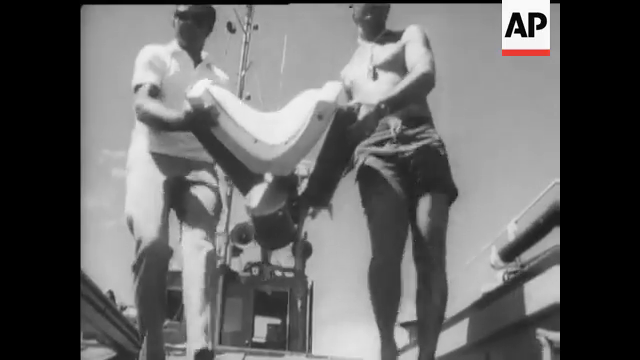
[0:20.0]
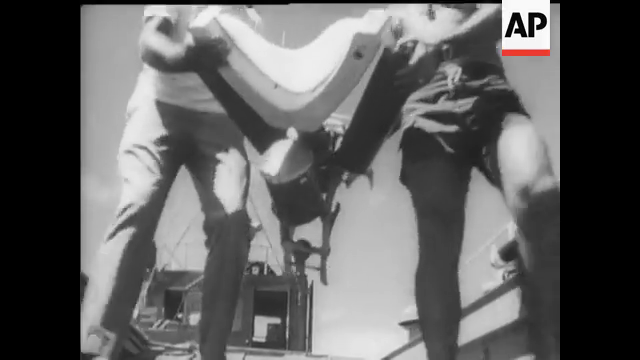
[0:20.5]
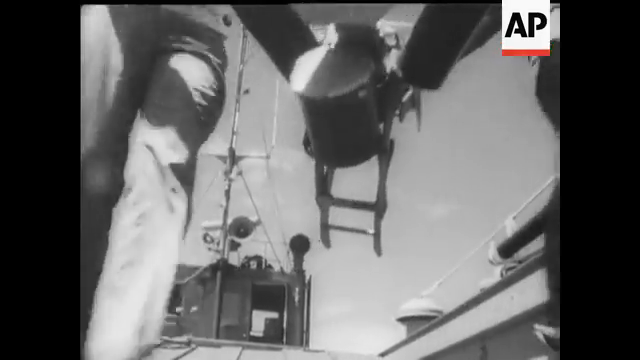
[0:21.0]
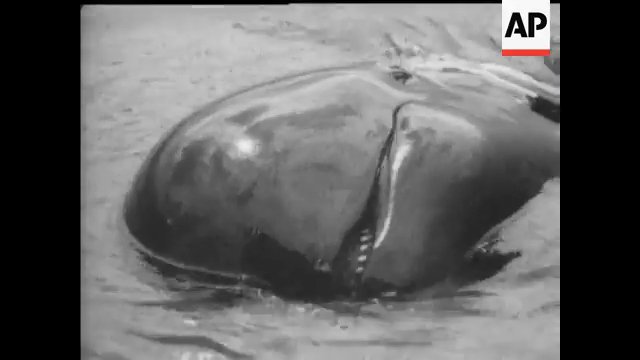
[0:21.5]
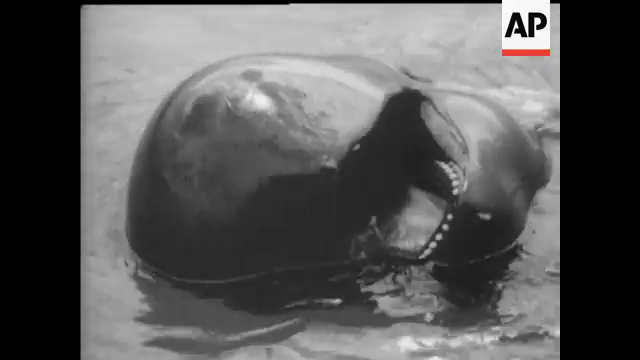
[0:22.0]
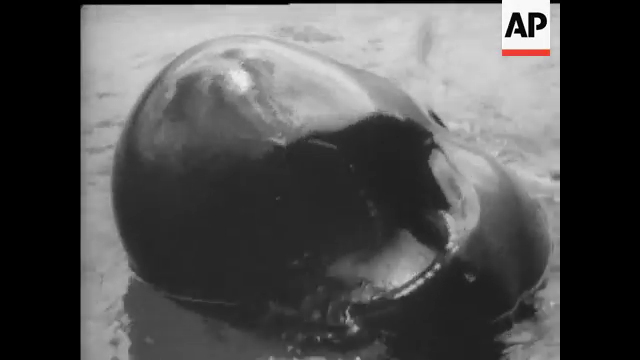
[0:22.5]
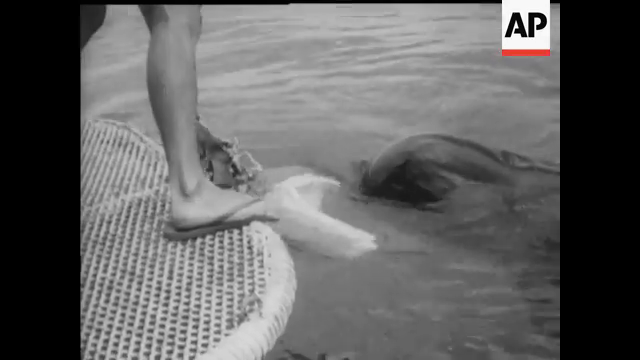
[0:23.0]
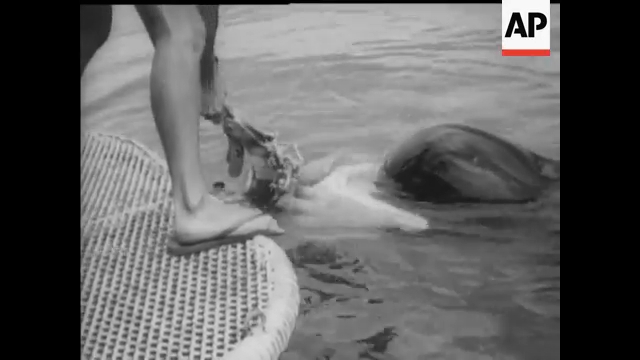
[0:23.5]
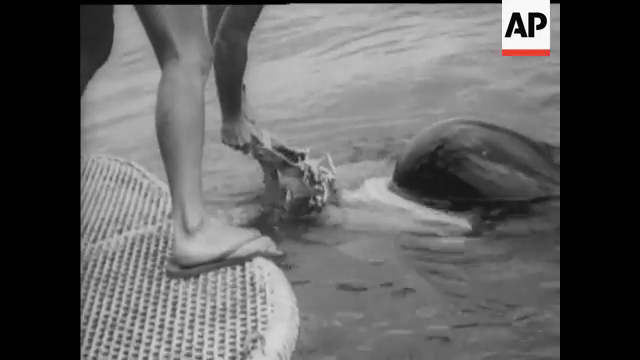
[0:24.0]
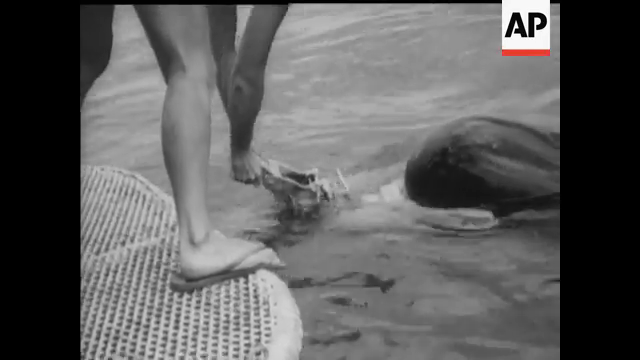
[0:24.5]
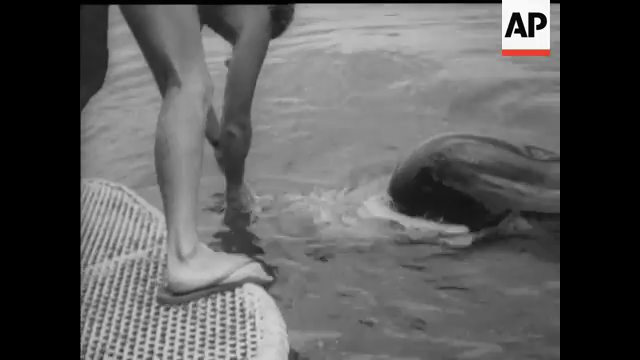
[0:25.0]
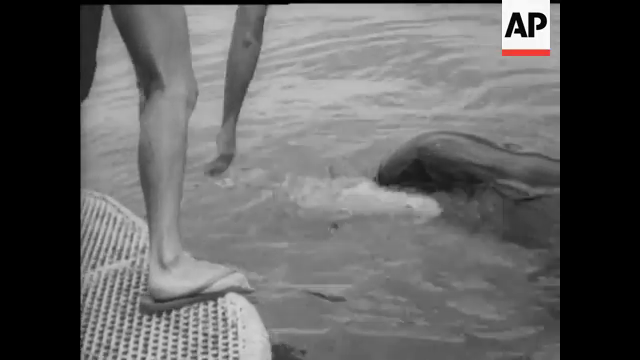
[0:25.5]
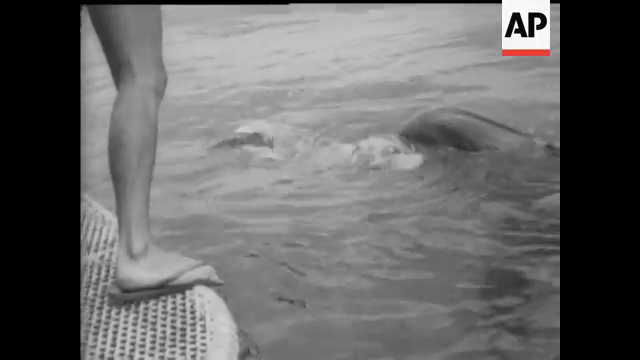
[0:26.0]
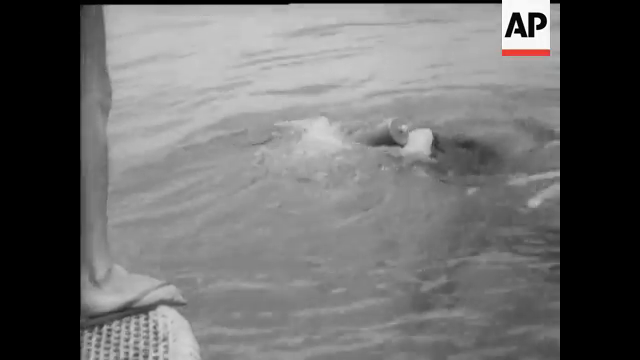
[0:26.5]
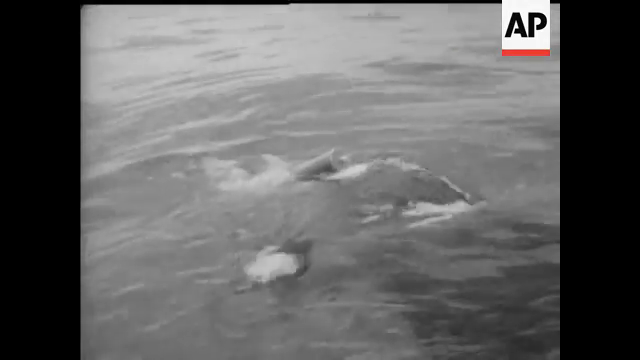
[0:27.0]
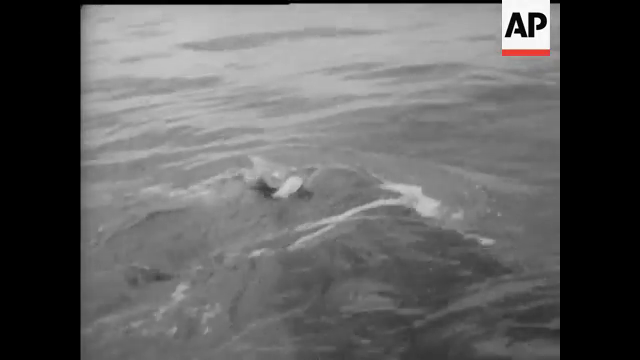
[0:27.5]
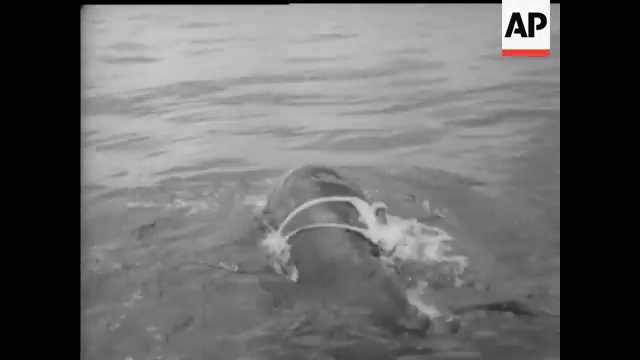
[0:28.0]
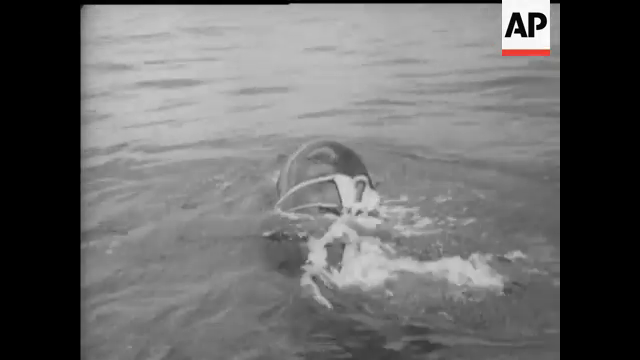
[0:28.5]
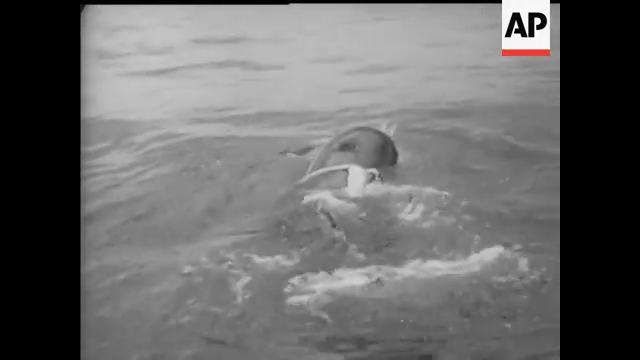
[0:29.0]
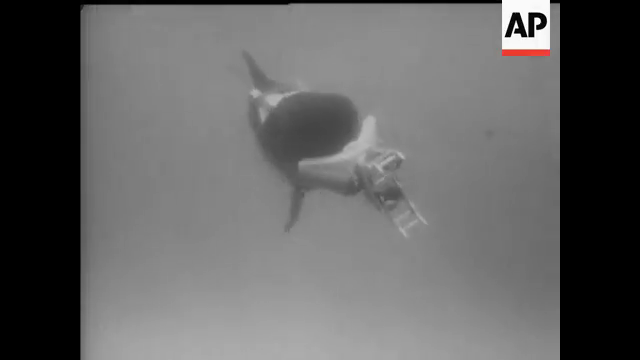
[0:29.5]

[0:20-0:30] Black and white footage shows two sailors carrying a piece of equipment on a ship, seen from the ground looking up. The sailor on the right wears only shorts, and the sailor on the left wears a white polo shirt and light-colored pants; they are carrying a white plastic object. A close-up then shows what looks like a black beluga whale opening its mouth. A sailor standing on a mesh platform to the left of the whale puts the white object onto the whale's face, and the whale takes the object and swims away. Another shot shows the whale moving through the water with the white plastic object wrapped around its head. In the top right of all these shots is the AP icon, with black "AP" letters on a white background with a red bottom.